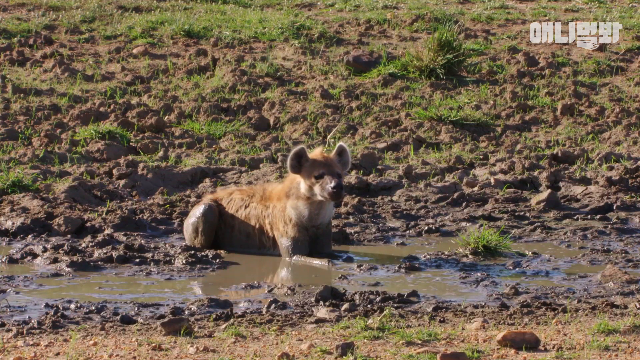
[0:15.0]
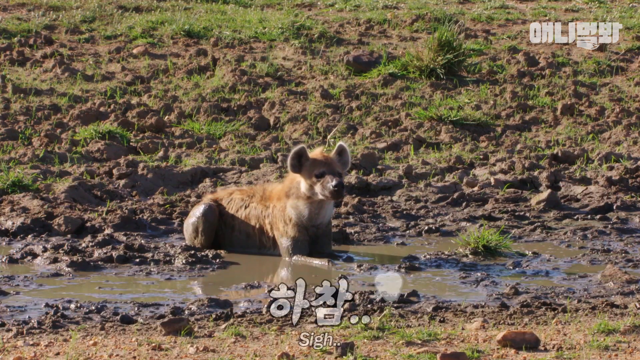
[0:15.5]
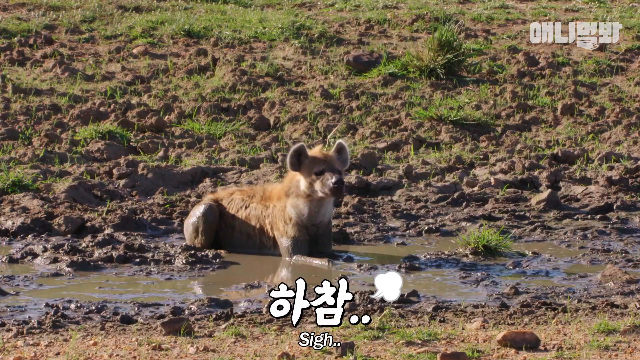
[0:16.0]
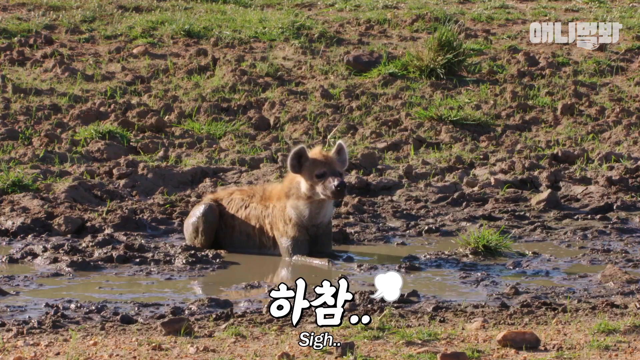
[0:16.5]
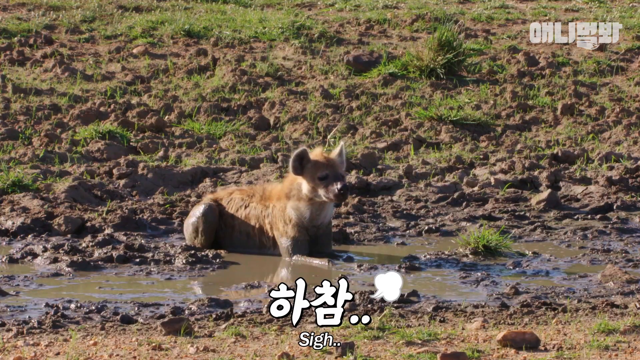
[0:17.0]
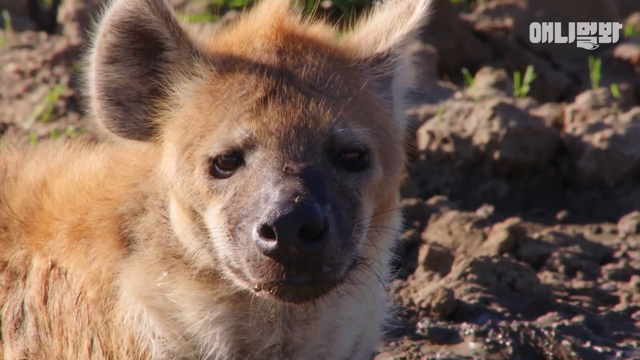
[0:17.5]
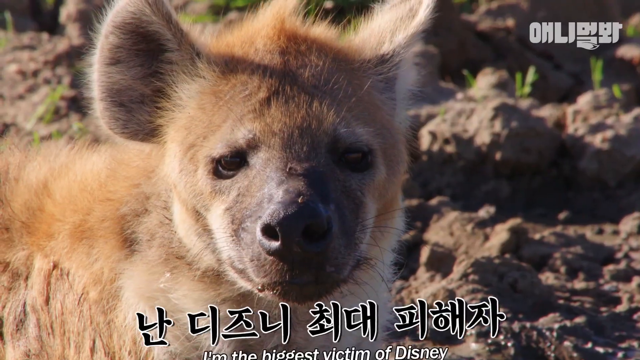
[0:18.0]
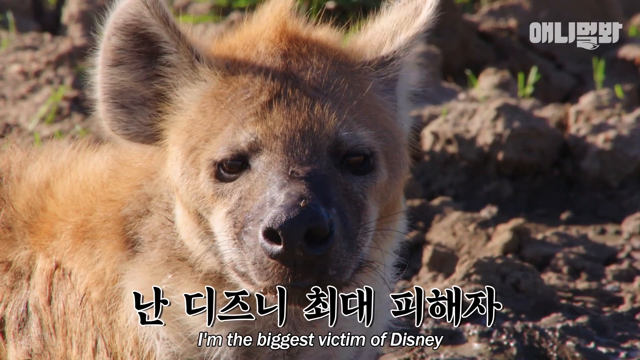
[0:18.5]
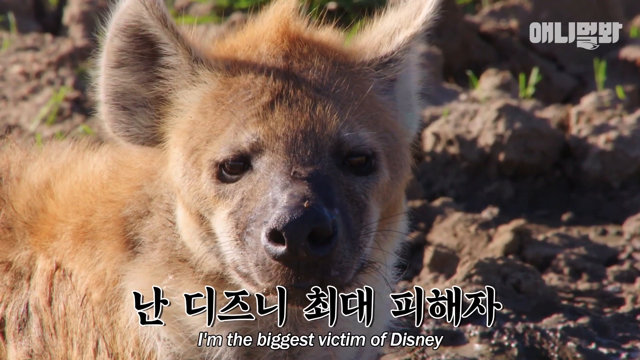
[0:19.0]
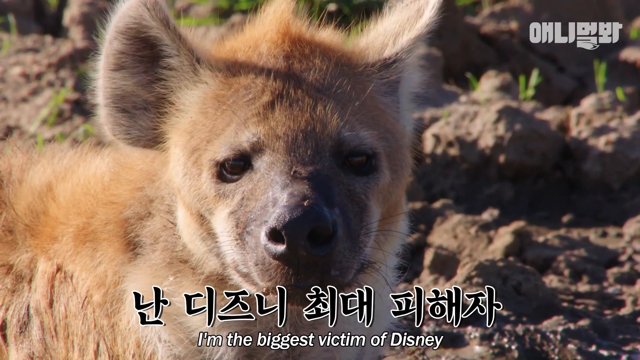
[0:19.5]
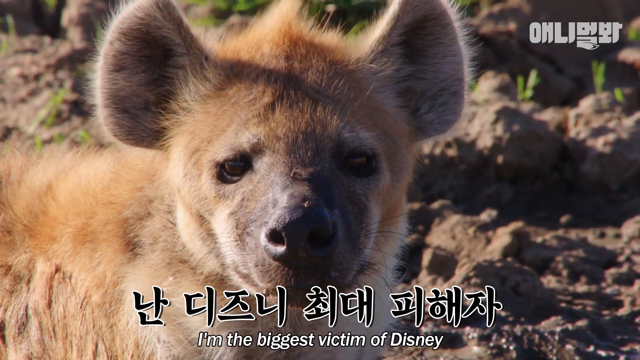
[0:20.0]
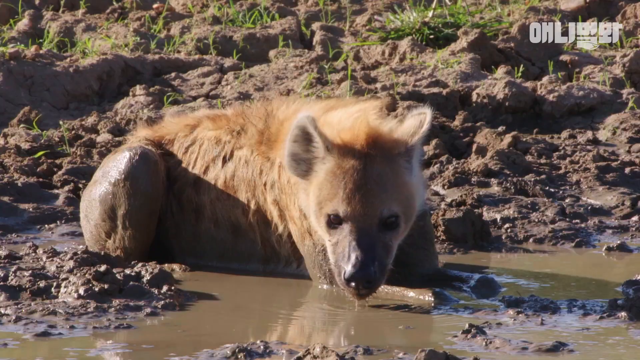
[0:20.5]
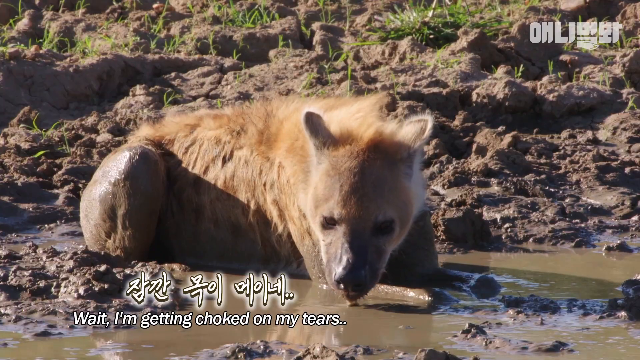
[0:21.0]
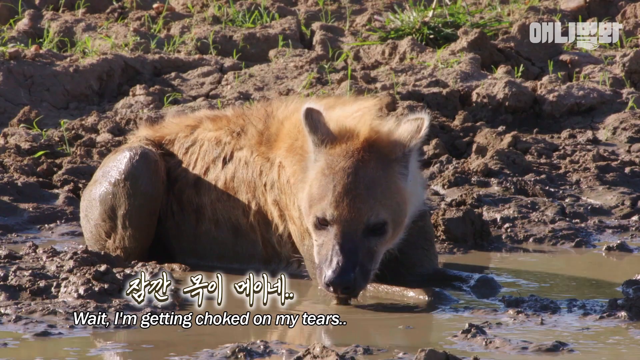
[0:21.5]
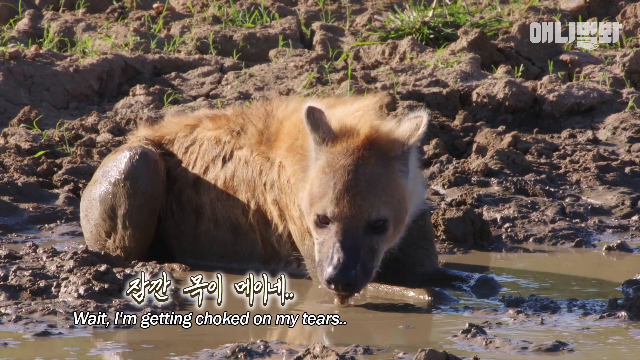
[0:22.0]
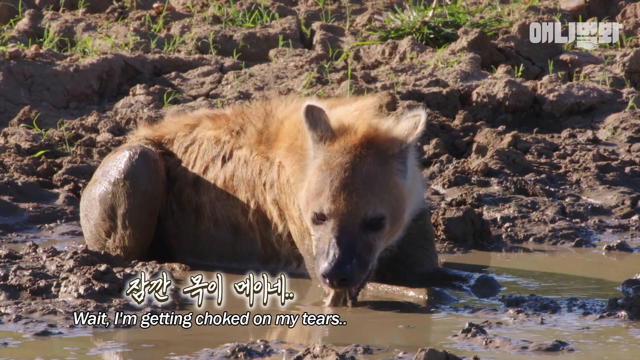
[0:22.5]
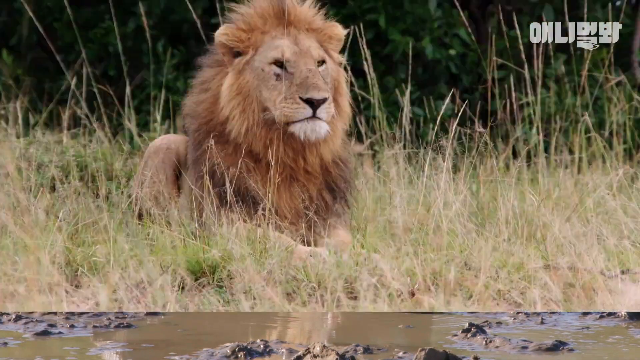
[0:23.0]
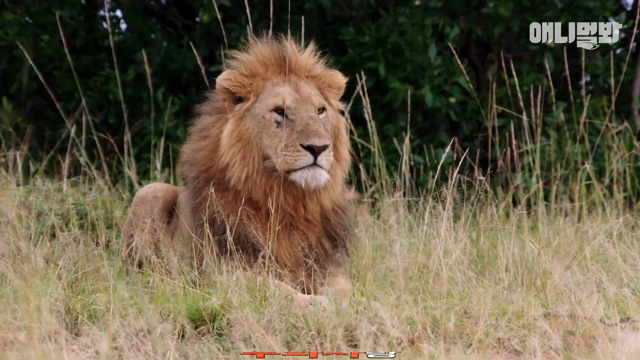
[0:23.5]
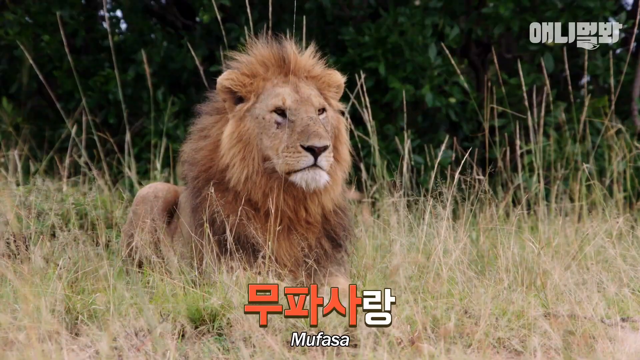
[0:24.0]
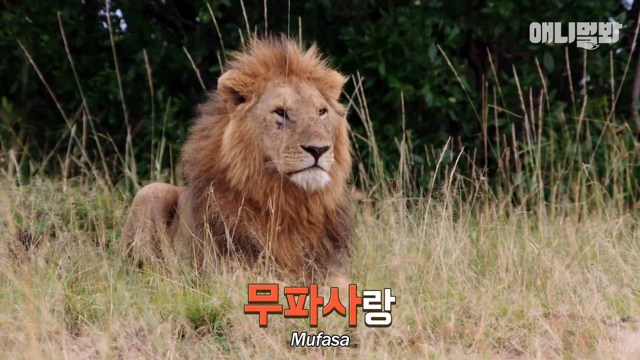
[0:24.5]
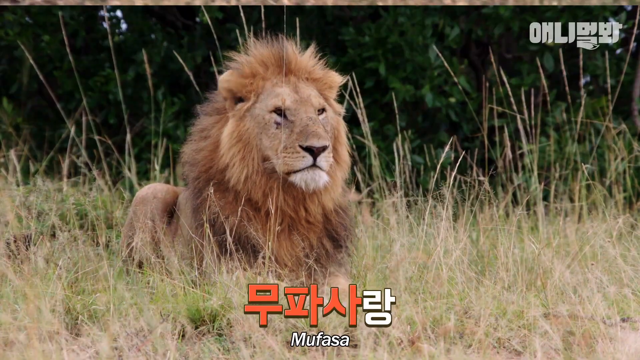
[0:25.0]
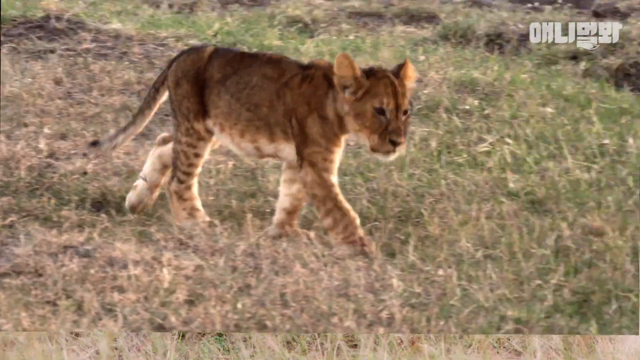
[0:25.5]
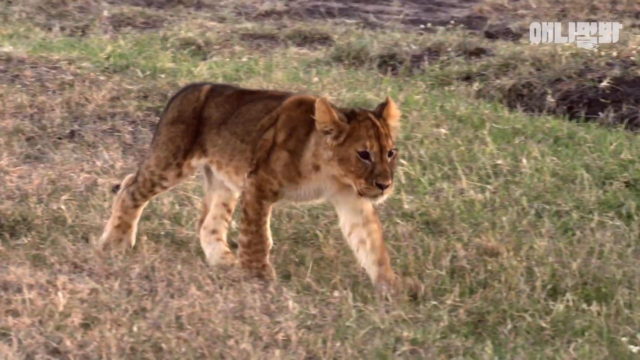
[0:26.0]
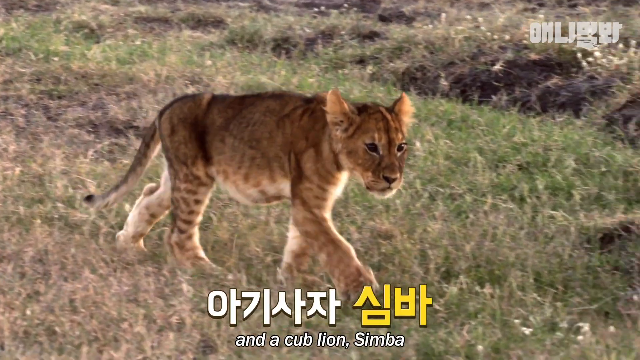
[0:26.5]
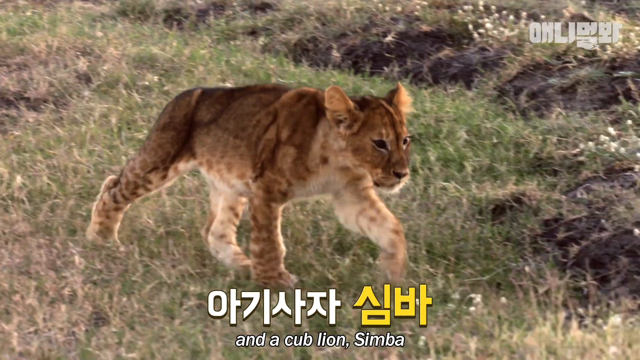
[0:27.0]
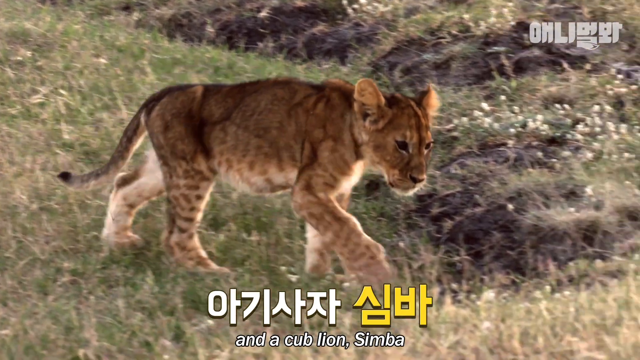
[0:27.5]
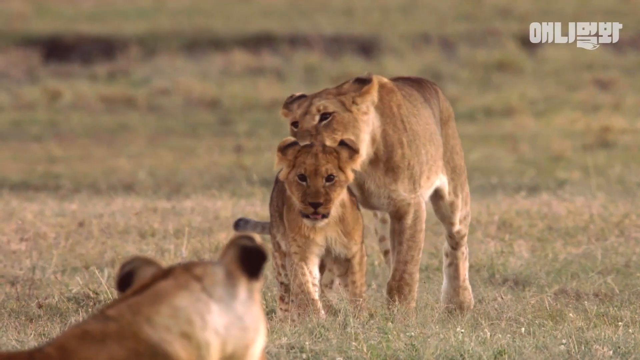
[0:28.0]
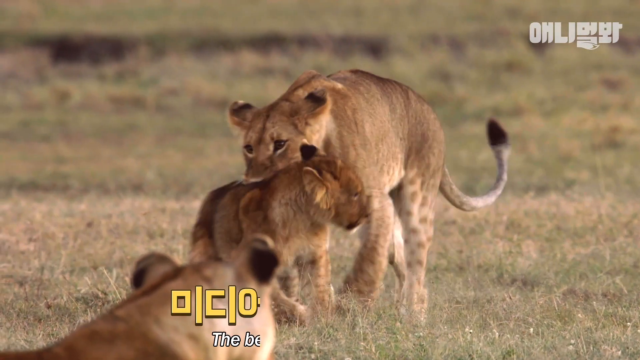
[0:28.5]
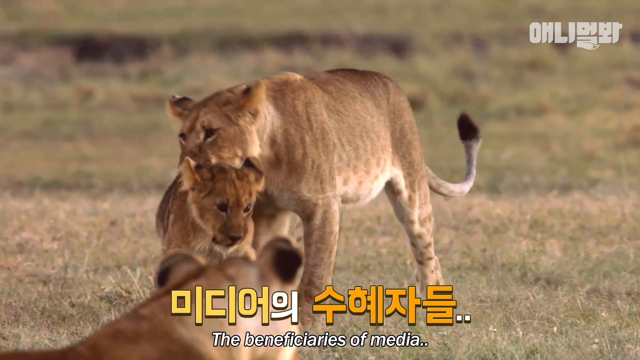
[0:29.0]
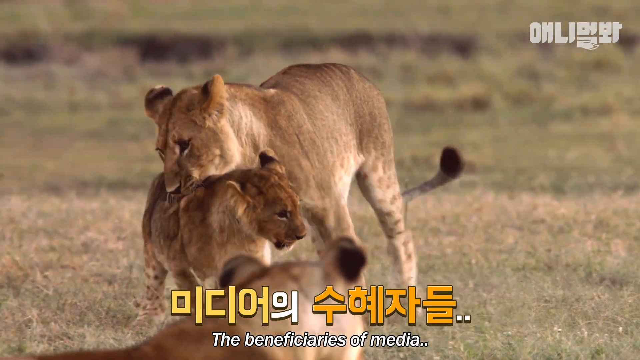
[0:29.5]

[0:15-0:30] Hyenas and lions appear together. Various lions are shown: a male with a full mane, cubs, and females without manes. The lions play with their pride, while the hyenas either gaze around or drink water from a dirty puddle. There seem to be several animals, probably around ten in total. The setting seems to be the same savanna, and the captions indicate that there is a rivalry going on.